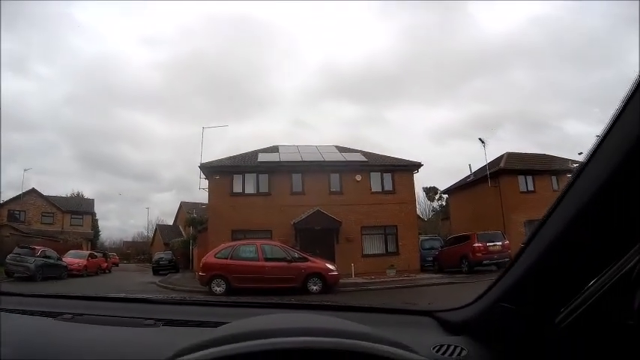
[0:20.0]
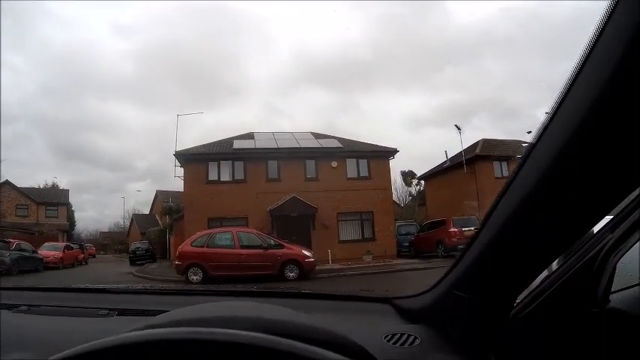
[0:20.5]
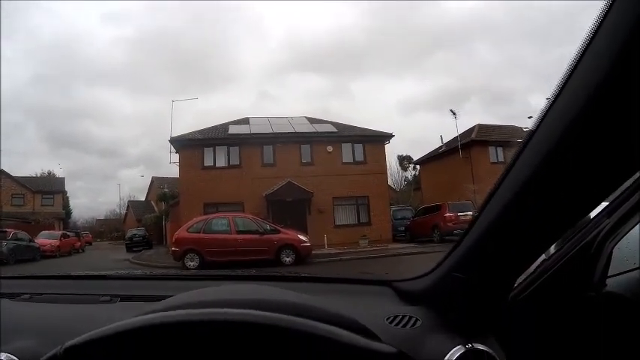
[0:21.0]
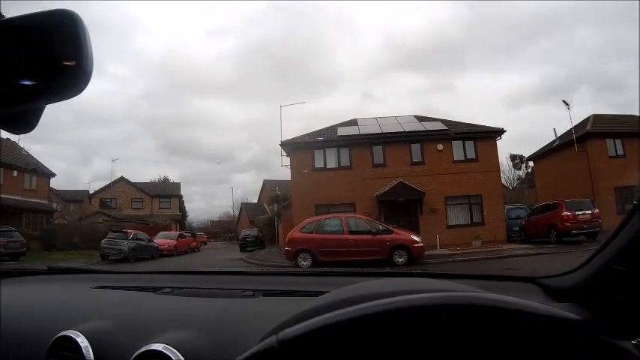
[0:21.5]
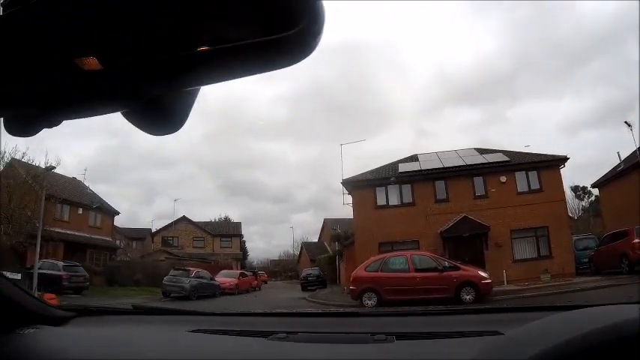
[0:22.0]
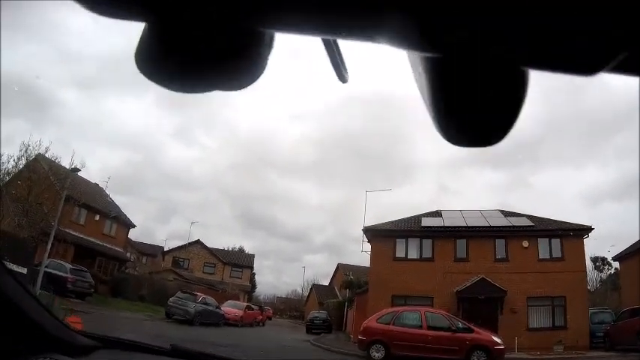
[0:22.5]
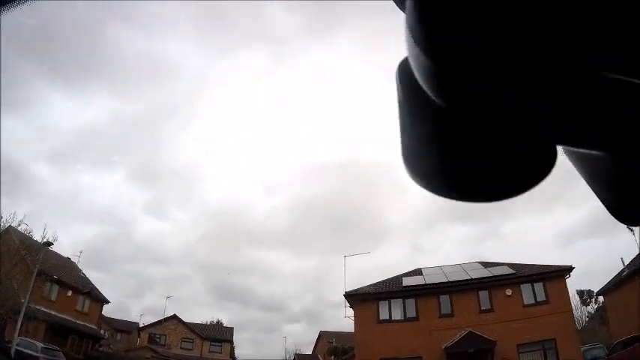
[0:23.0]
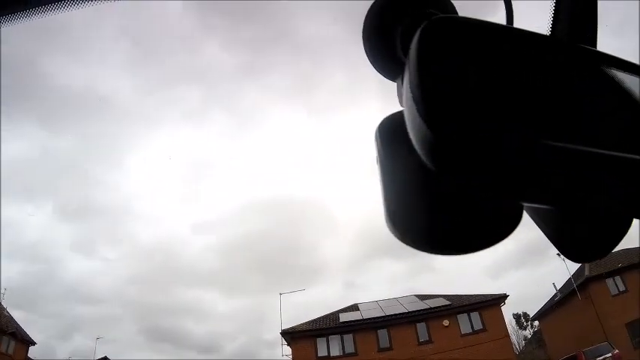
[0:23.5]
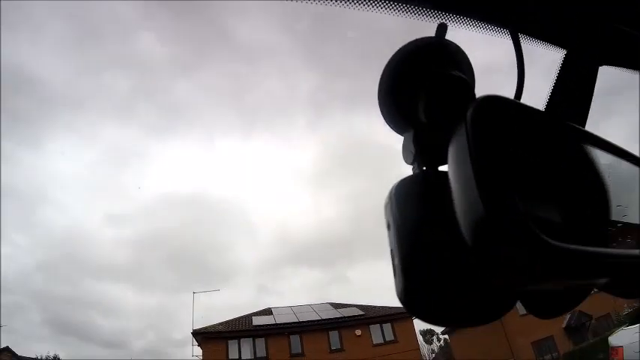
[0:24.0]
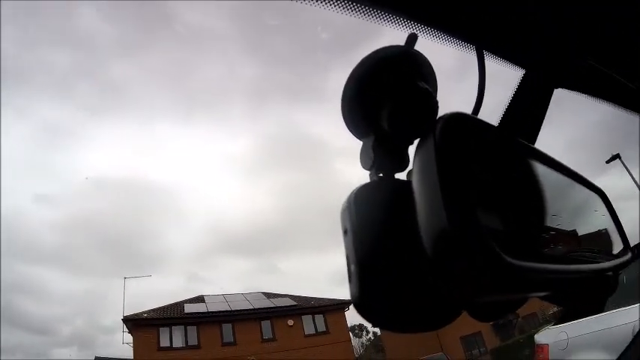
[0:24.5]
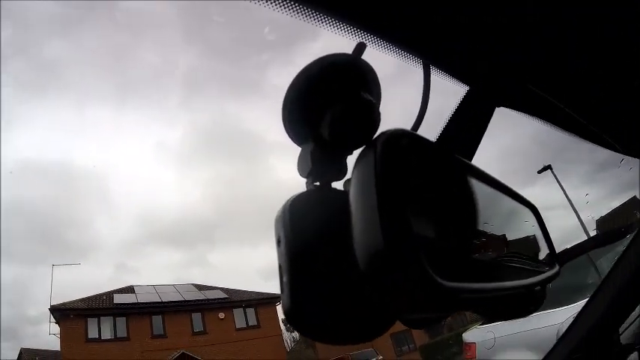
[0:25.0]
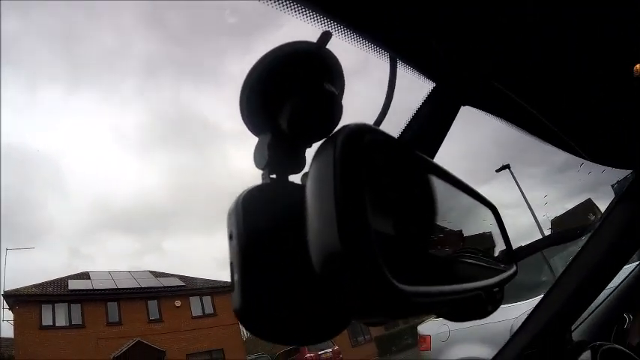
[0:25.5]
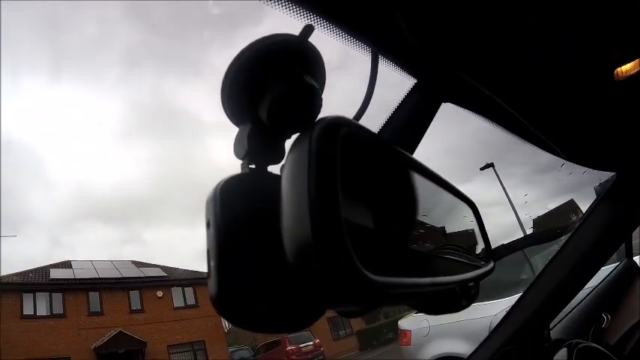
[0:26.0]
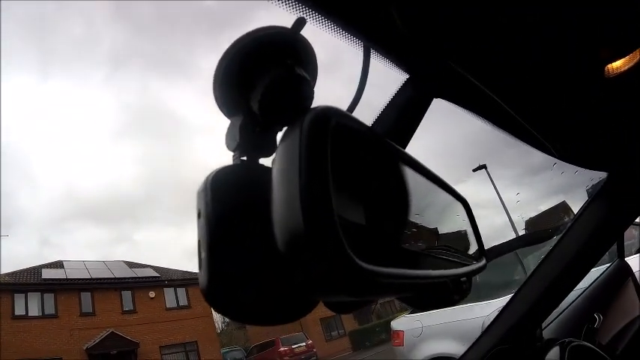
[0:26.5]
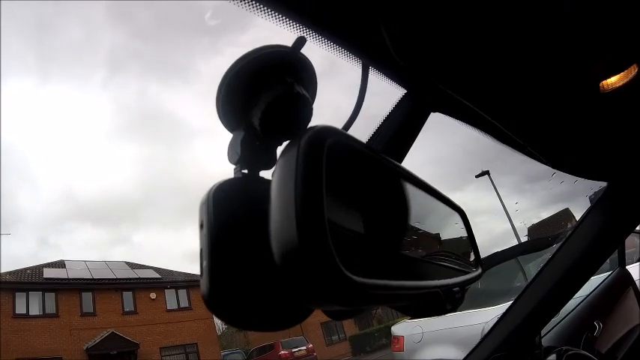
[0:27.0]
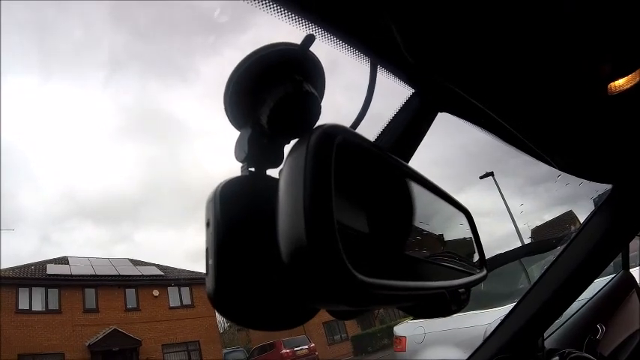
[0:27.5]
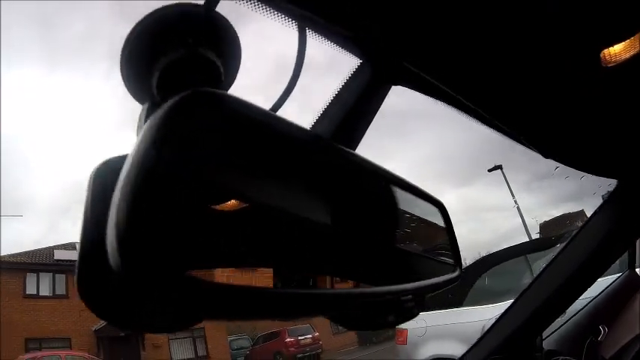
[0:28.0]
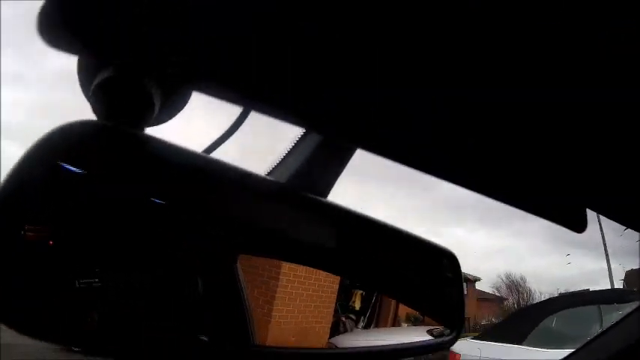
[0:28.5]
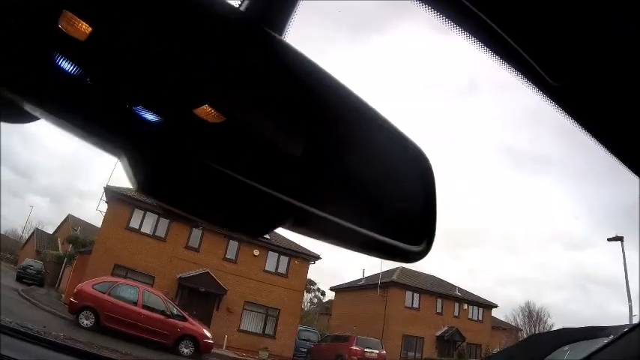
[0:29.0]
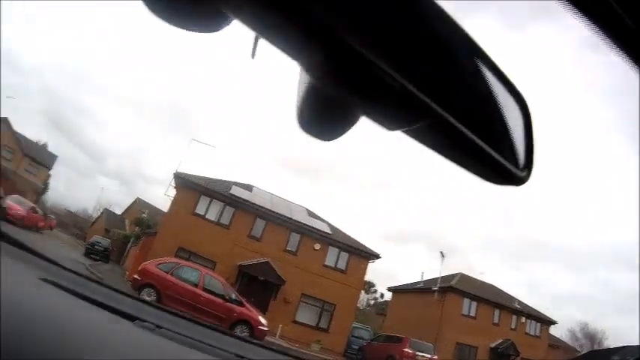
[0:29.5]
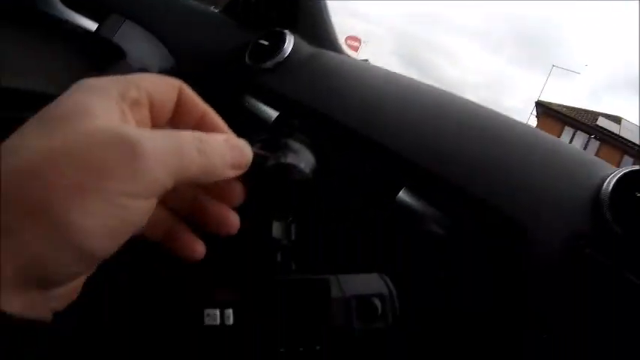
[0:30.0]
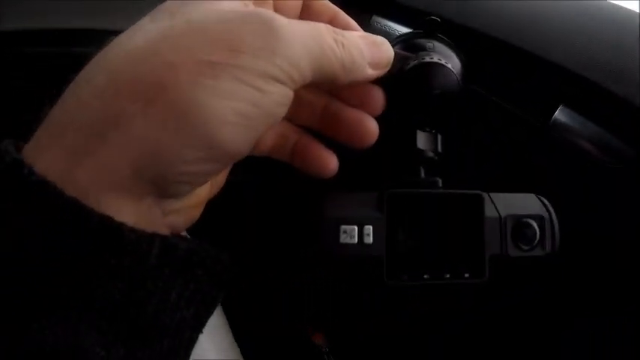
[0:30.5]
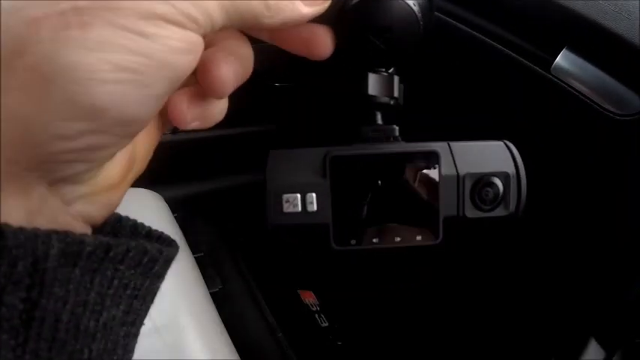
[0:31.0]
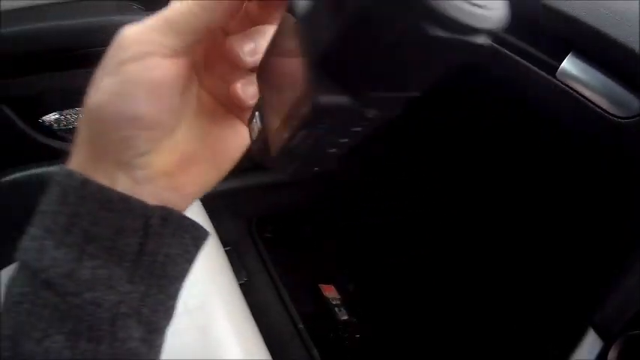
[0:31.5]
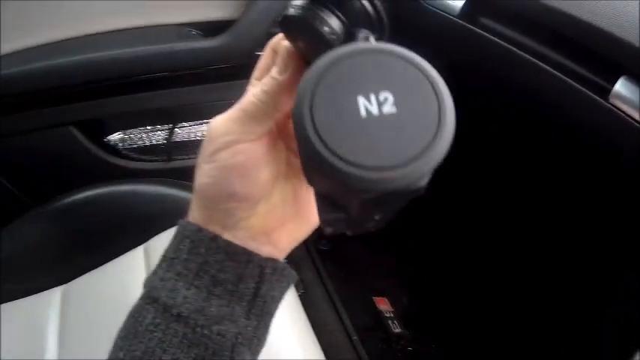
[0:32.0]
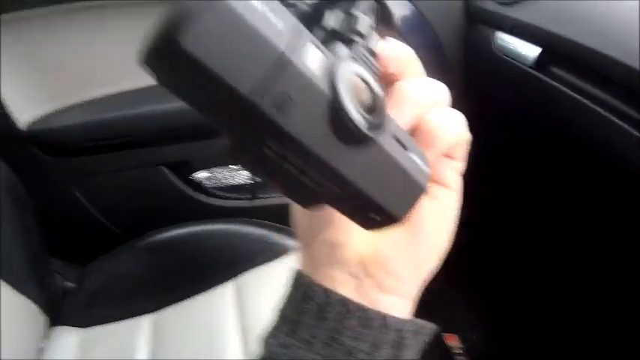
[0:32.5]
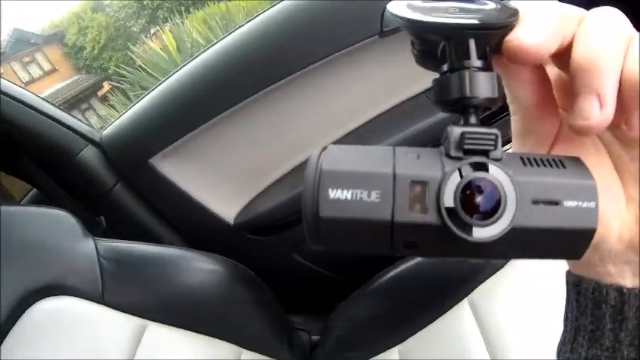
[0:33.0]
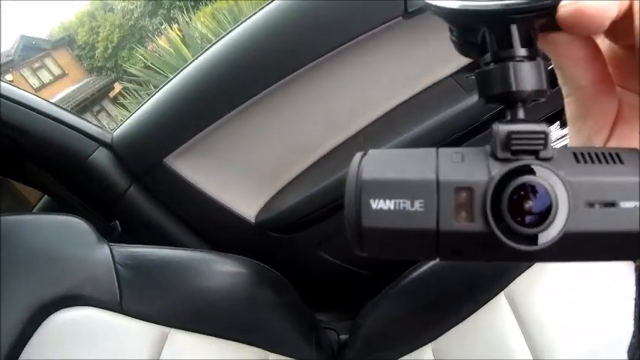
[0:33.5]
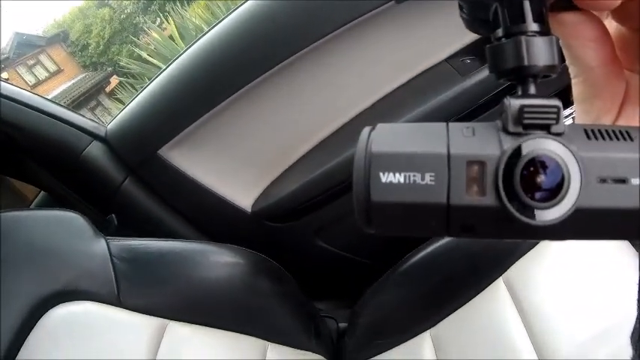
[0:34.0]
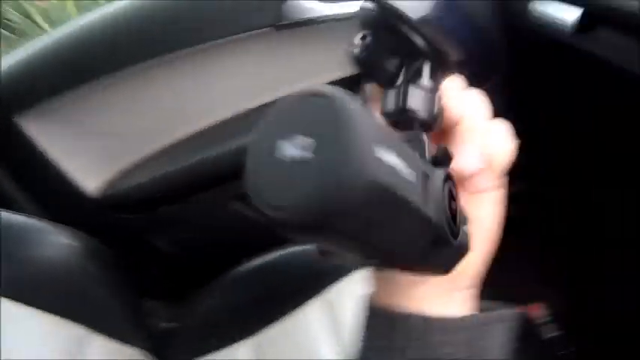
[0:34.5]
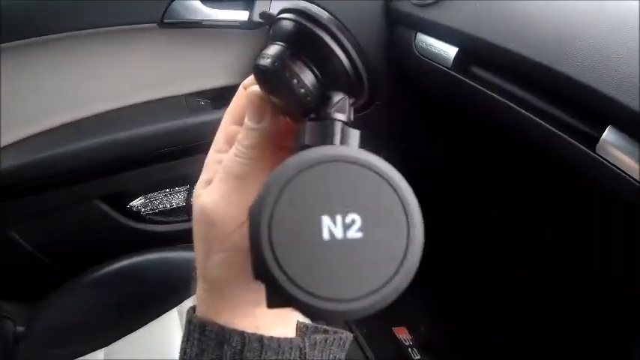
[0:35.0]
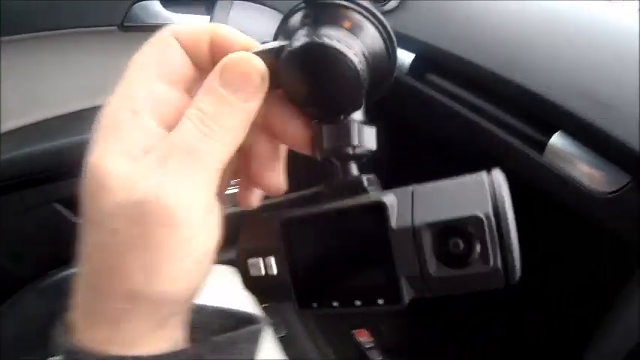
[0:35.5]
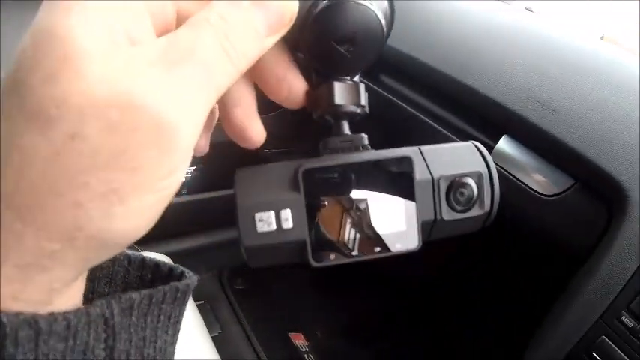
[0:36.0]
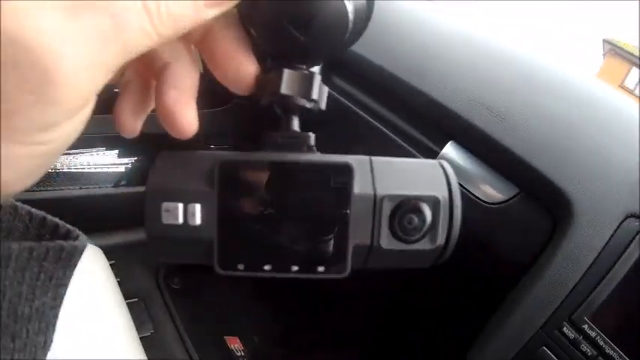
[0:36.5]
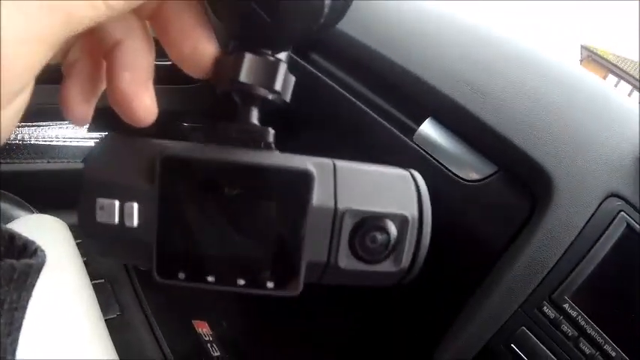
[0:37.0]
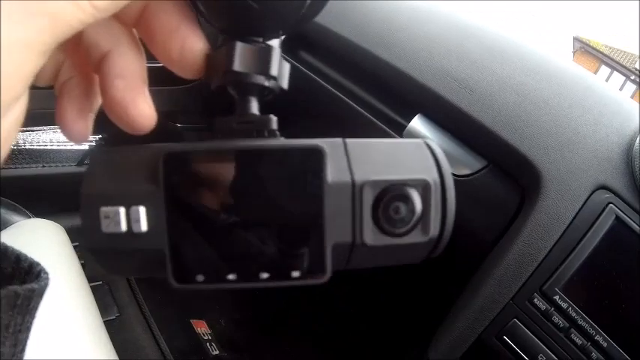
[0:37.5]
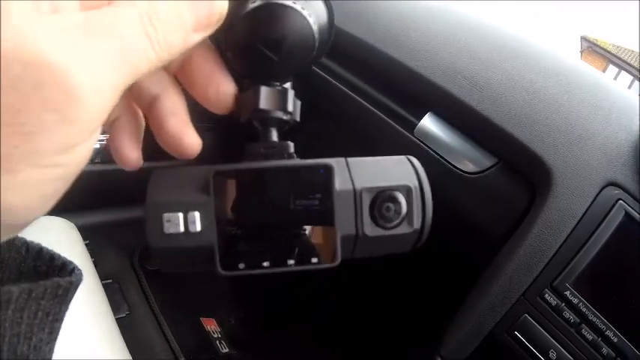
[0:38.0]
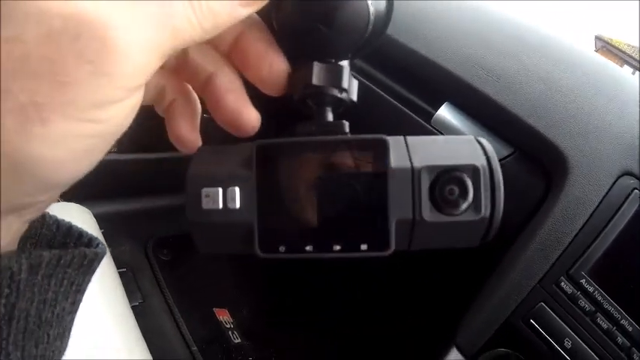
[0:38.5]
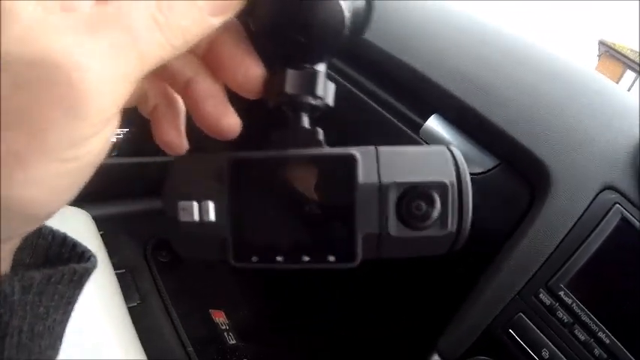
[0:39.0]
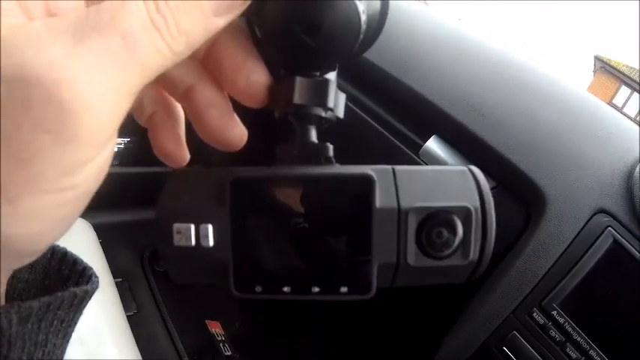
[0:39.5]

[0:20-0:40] The view is from inside a car, as if from the driver's seat, with a little of the steering wheel visible in front. The steering wheel is on the right side of the car, so it looks like England or another country with right-hand drive. The car is not moving. It looks like a residential neighborhood with houses that do not look very expensive; they may be apartment buildings, and they are all basically a rusty brown color. The one directly in front has some solar panels on the roof. They look a little dingy, and there is almost no greenery, just a couple of trees very far in the background. The two houses straight ahead do not appear to have any grass at all, while the one to the left apparently has a little grass in the front yard. Quite a few cars are parked on the street, including a small reddish rust-colored car, probably a compact, parked horizontally across the street in front of the house or apartment building. The sky is extremely cloudy, and the street looks dark, as if it may have rained earlier. The camera pans over to the rearview mirror, where some sort of black gadget is attached to the left side of it. The camera then pans down to someone's left hand holding some sort of black gadget, which they flip over to show. It may be a dash camera; it has "N2" on it and a little screen.